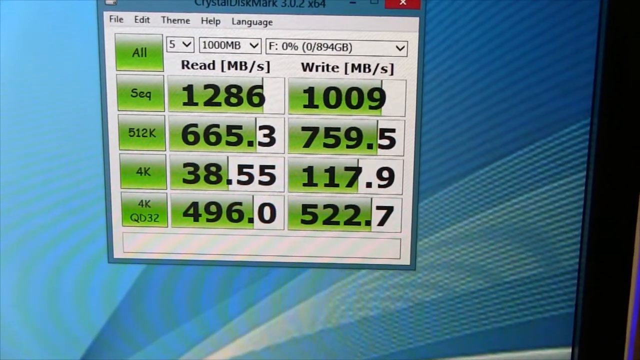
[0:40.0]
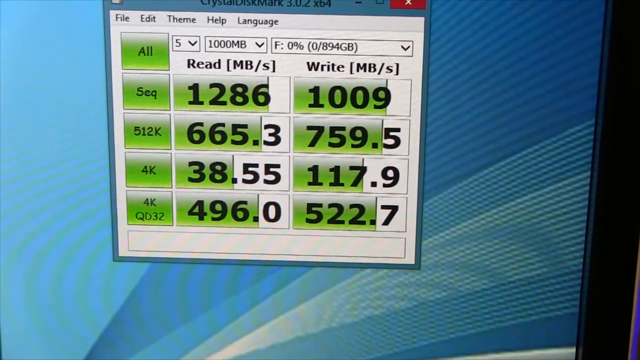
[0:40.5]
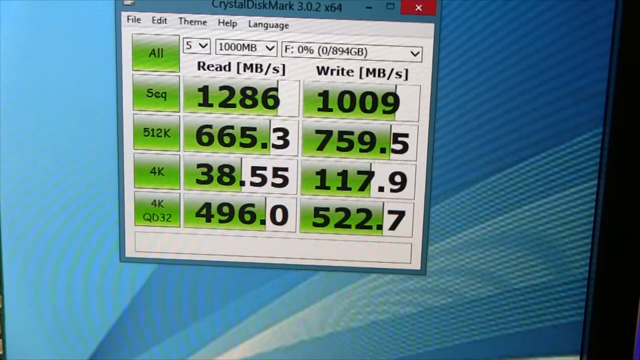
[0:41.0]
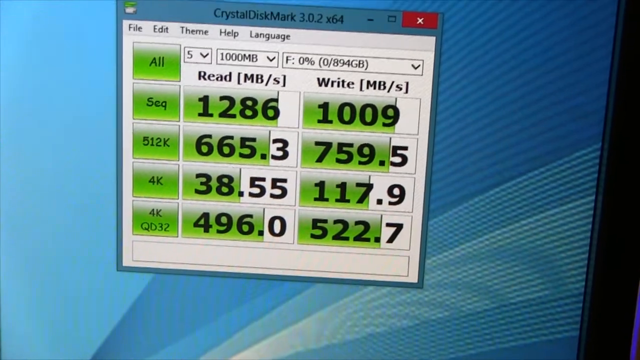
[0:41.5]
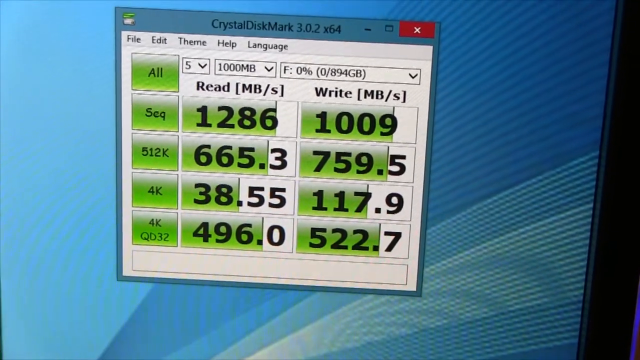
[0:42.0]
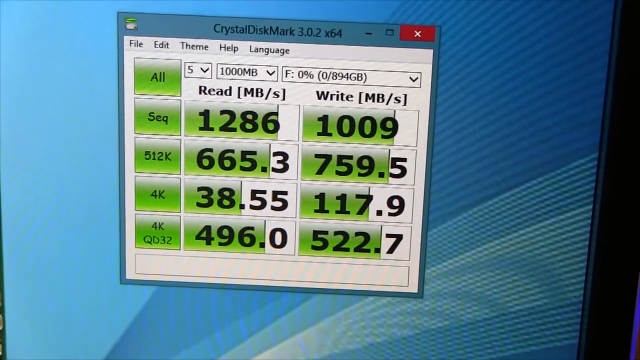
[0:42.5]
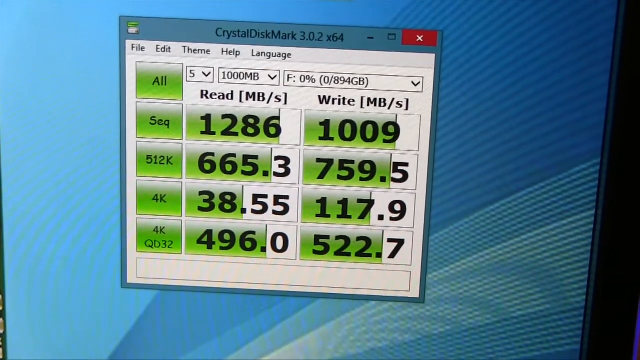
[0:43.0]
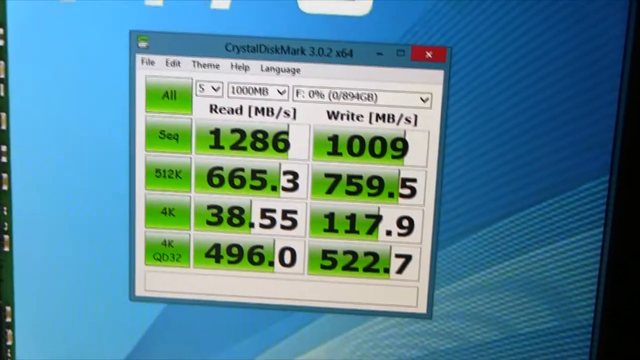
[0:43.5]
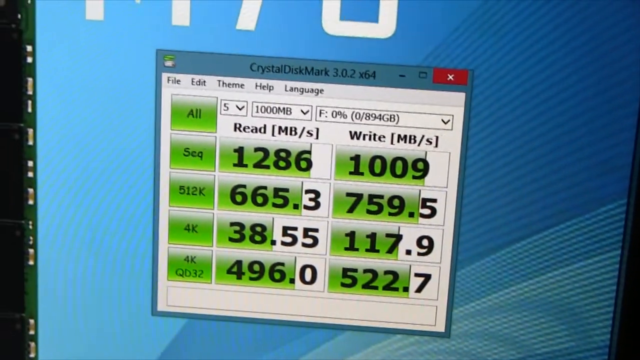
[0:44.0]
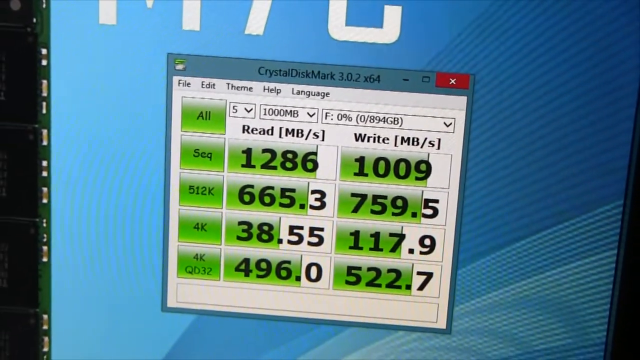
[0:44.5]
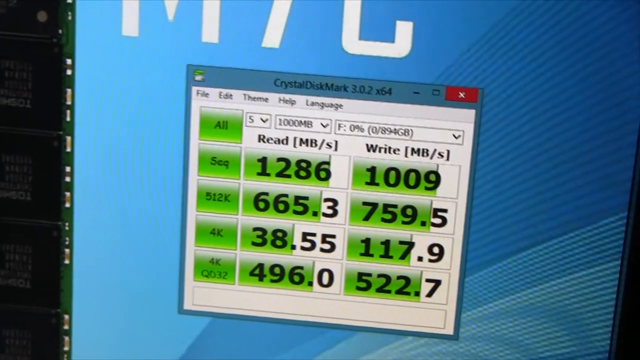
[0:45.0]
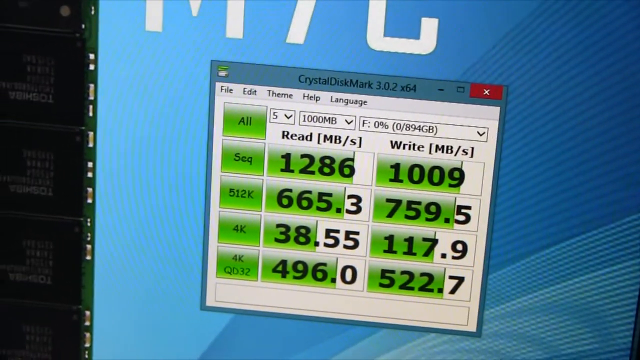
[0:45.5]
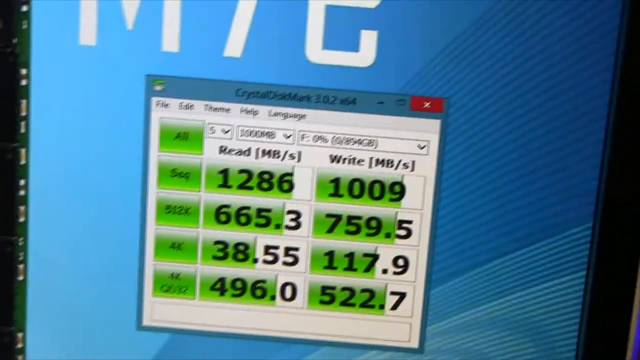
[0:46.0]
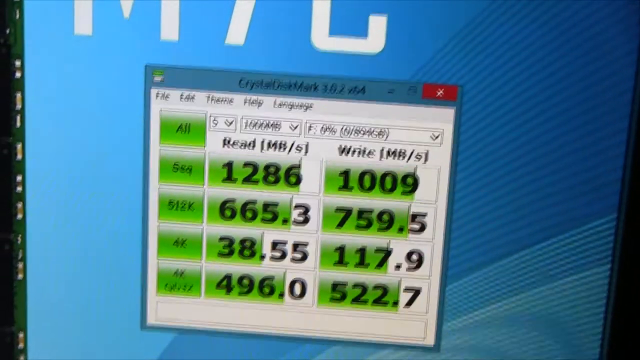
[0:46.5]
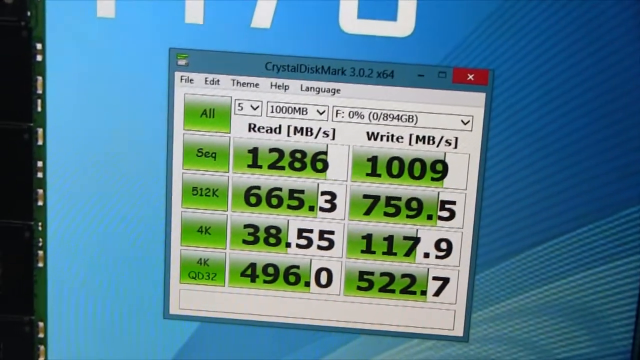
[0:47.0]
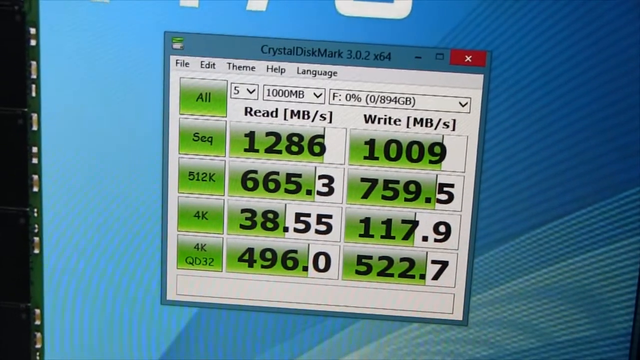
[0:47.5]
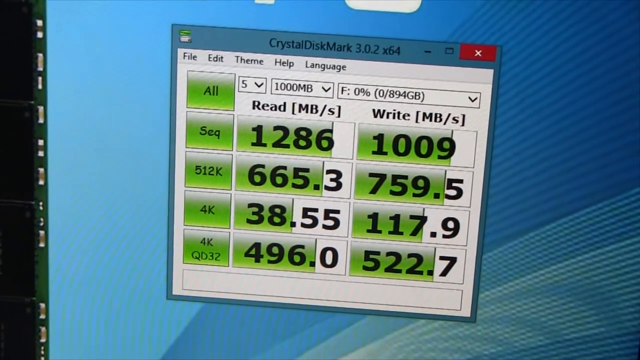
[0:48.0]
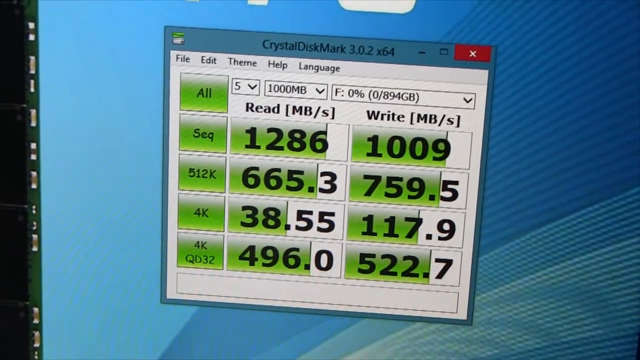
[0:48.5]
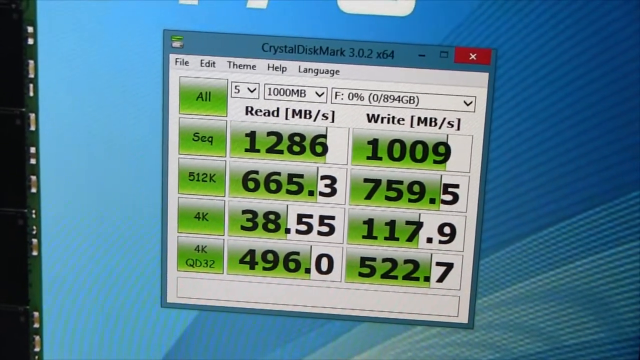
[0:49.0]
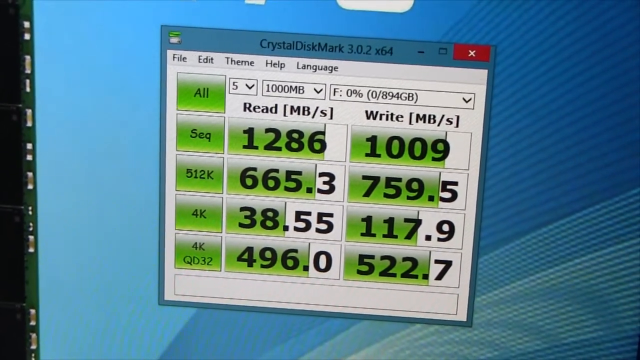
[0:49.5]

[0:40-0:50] The Crystal Disk Mark pop-up window remains on screen, showing the different sequences and the numbers for the read and write speeds. It runs different tests comparing the drive's performance with the expected speeds, showing results in MB for each type of test, either read or write, including sequential and random read and write performance. Different speeds are displayed for the SSD being tested, with read and write values in MB, sequential performance and 4k.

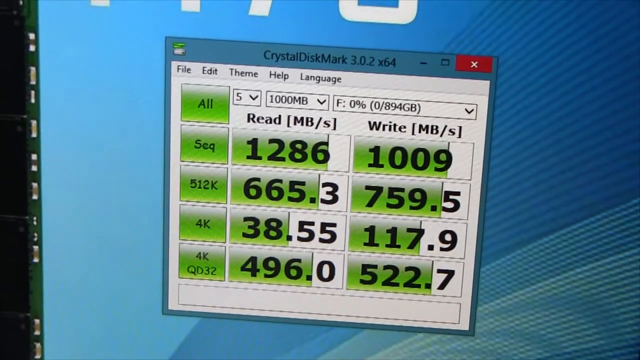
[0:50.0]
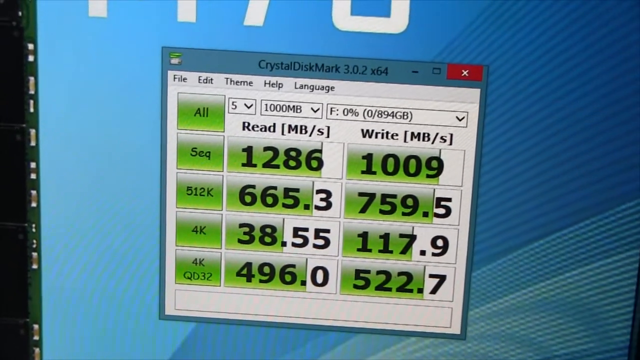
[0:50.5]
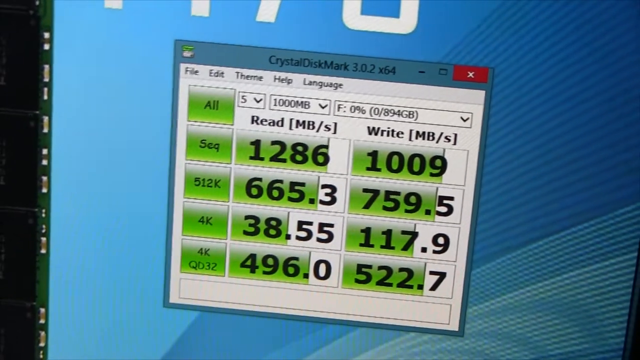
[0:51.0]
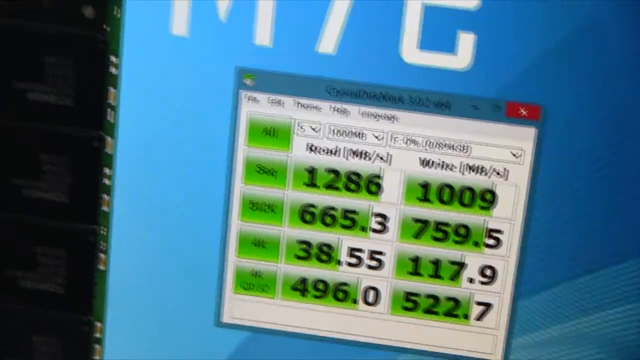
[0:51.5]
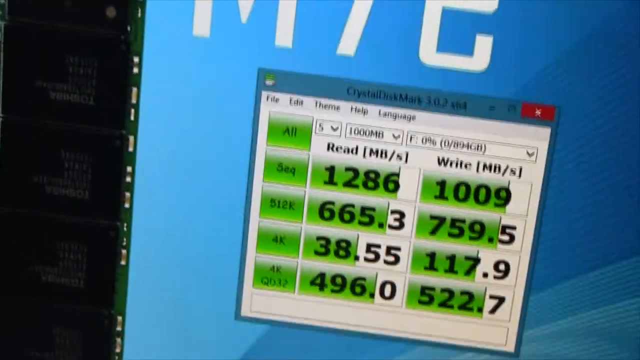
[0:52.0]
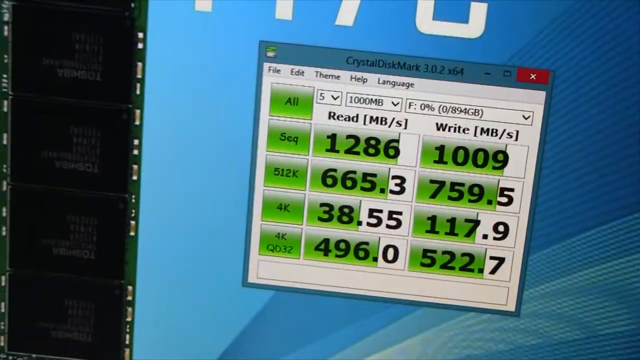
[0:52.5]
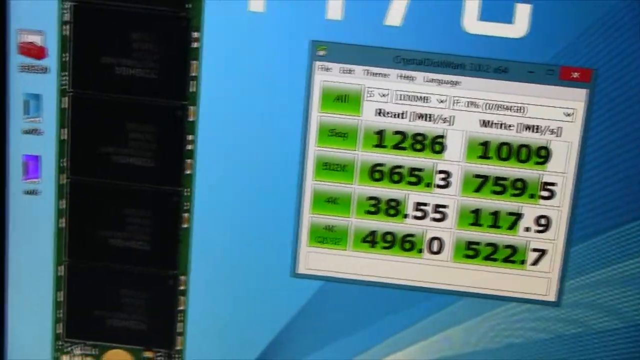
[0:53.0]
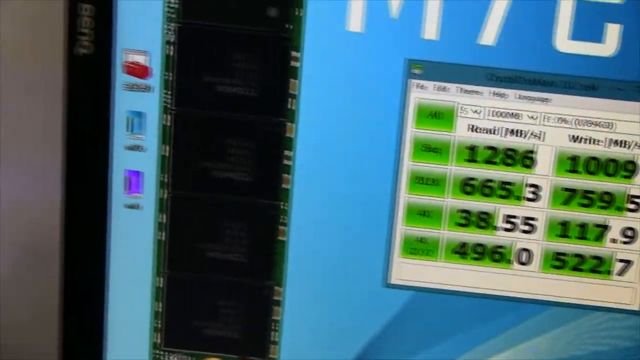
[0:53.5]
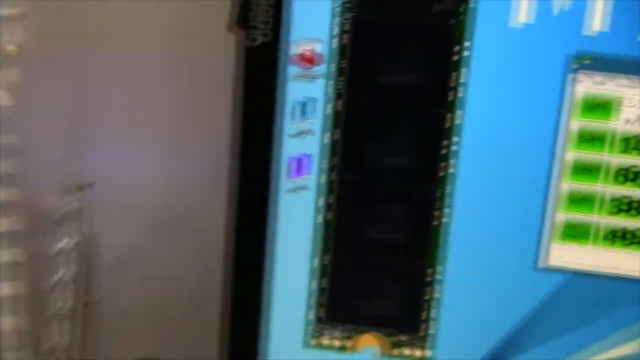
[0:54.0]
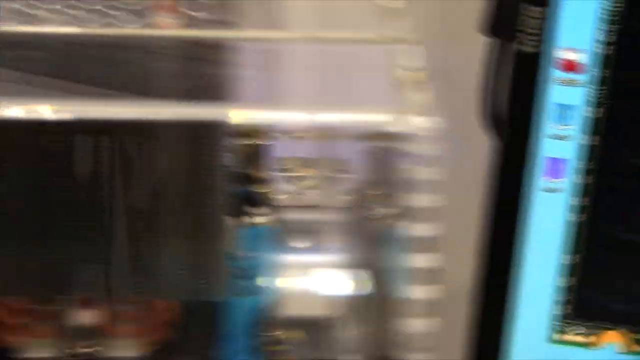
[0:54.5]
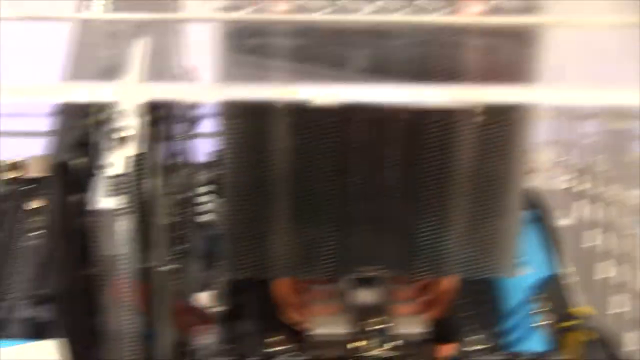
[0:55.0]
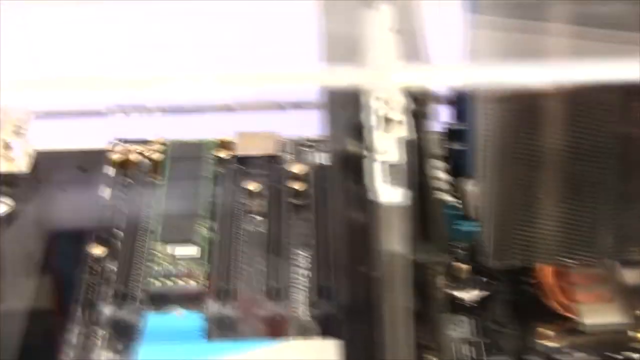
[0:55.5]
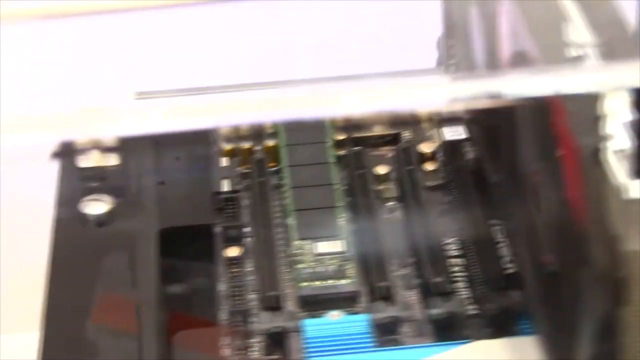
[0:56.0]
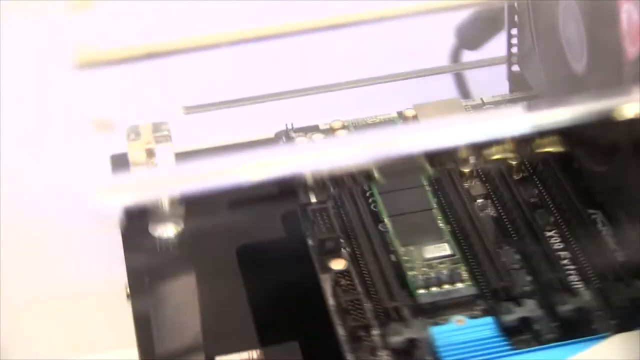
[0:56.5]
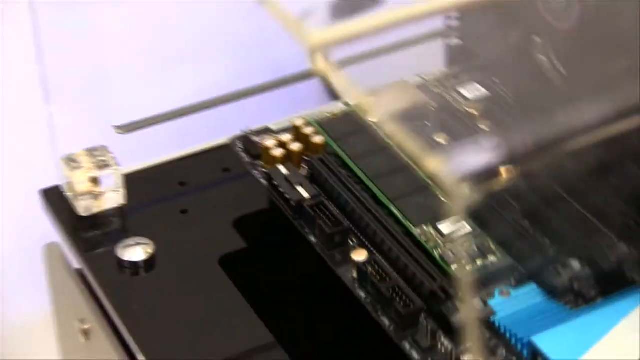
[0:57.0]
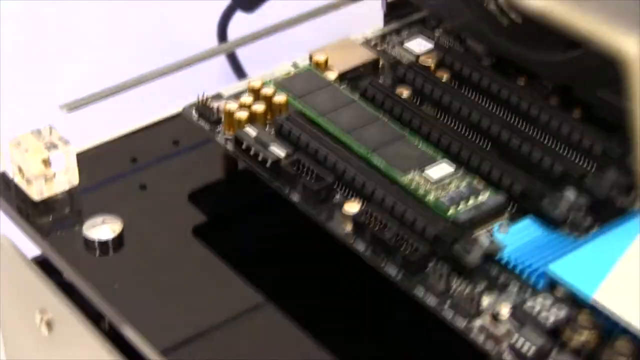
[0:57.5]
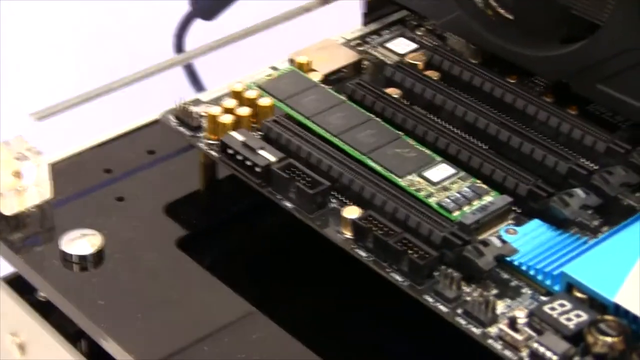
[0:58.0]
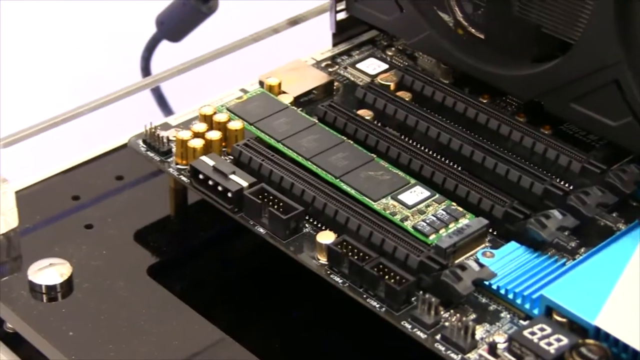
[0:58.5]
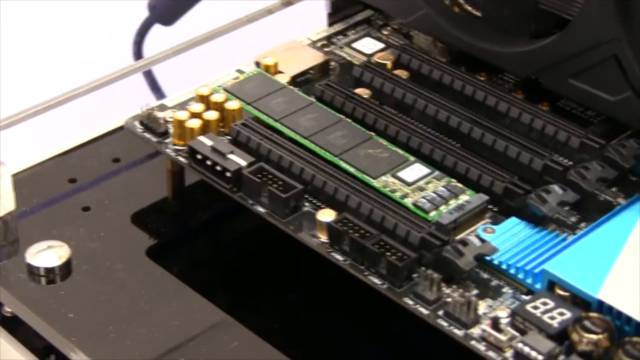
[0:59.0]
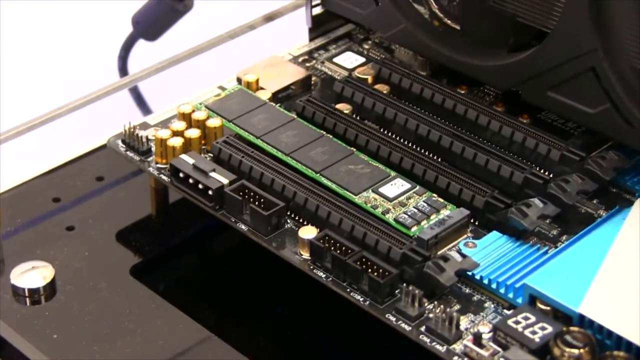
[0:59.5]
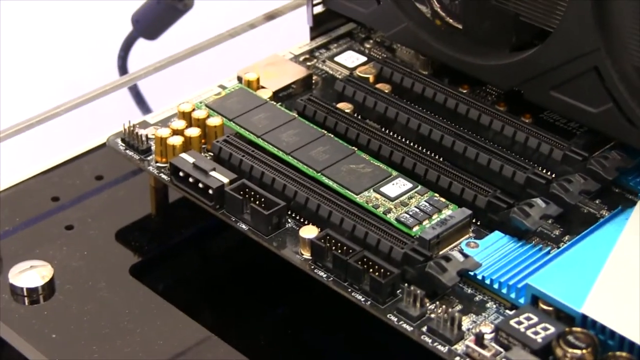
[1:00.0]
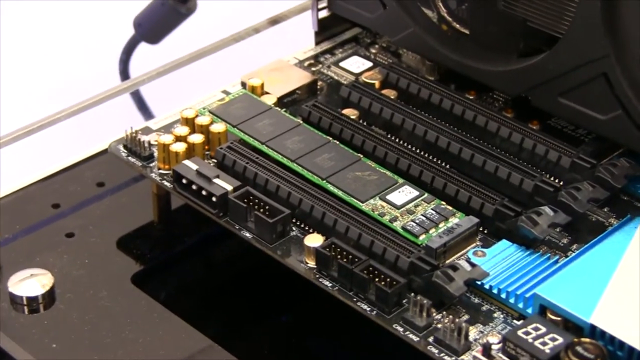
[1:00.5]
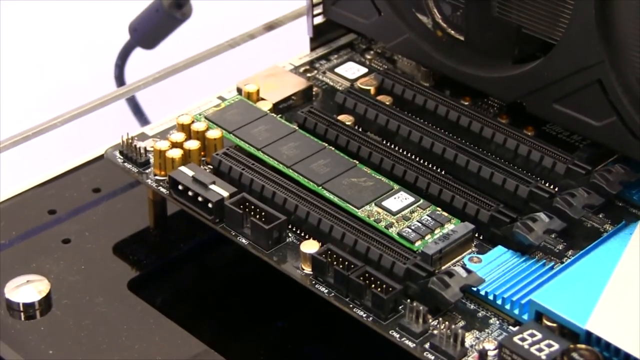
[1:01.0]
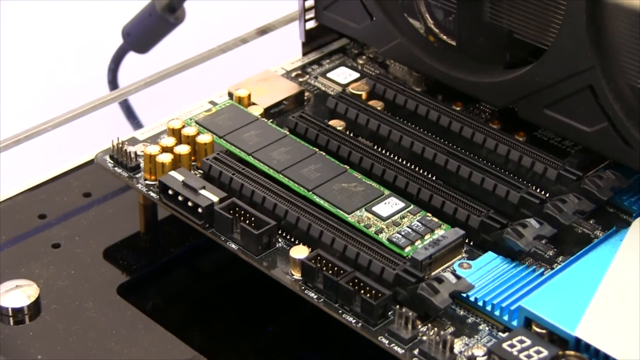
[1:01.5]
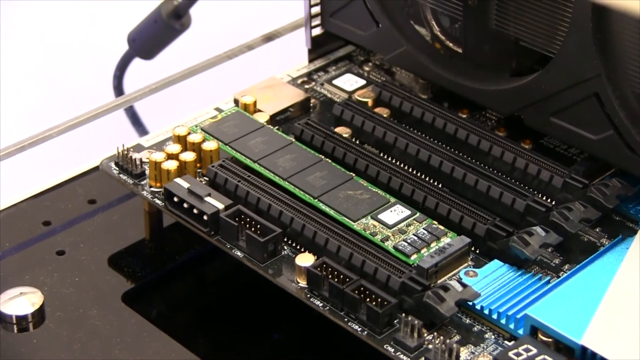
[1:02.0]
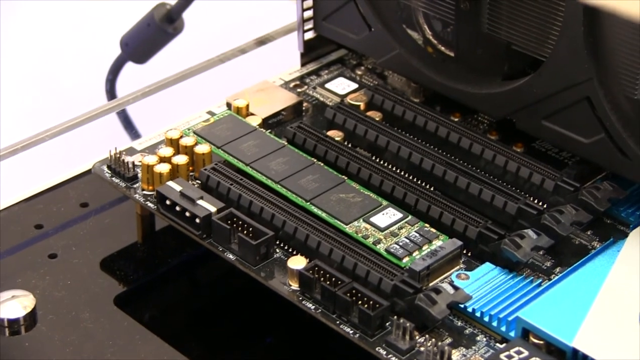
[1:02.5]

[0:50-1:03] After the Crystal Disk Mark results for the drive's performance, the video switches back to focus on the computer motherboard. The cables still hang out, and the RAM slots, the heat sinks, the power cable, and the fingers or shadow in the corner on the right side are visible.